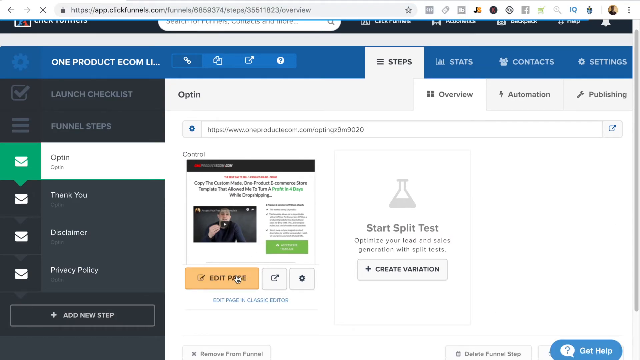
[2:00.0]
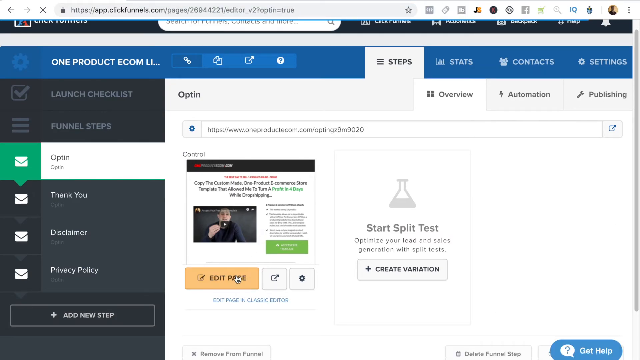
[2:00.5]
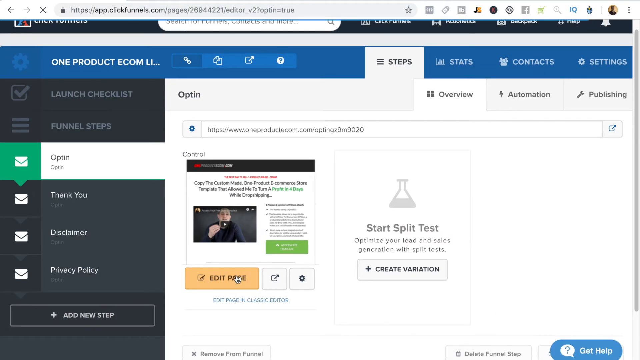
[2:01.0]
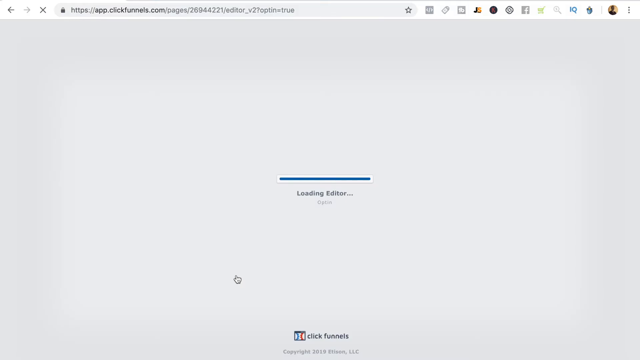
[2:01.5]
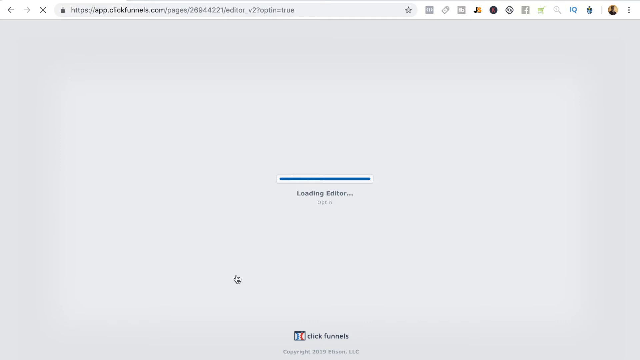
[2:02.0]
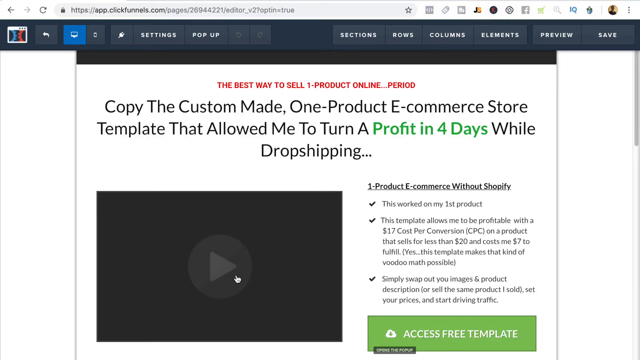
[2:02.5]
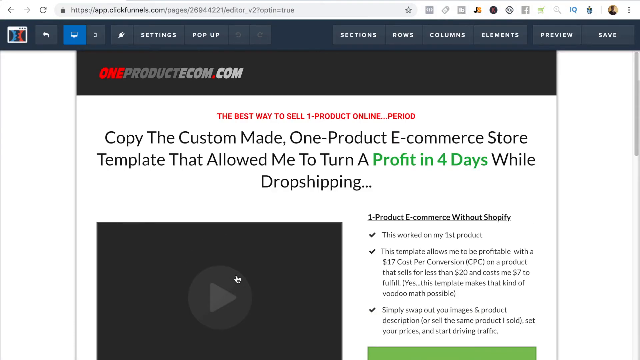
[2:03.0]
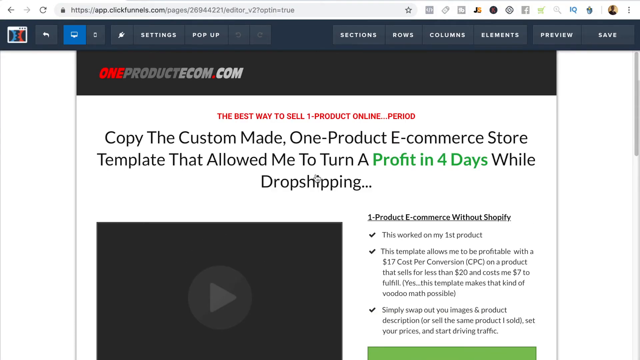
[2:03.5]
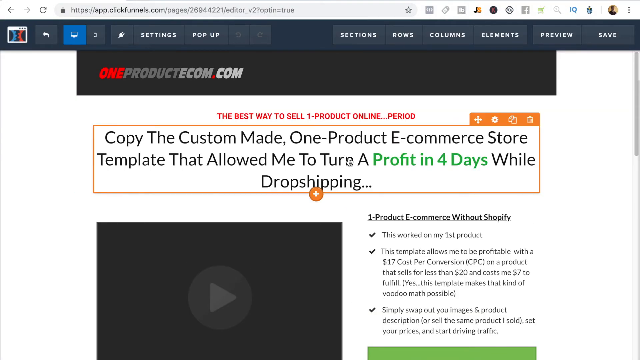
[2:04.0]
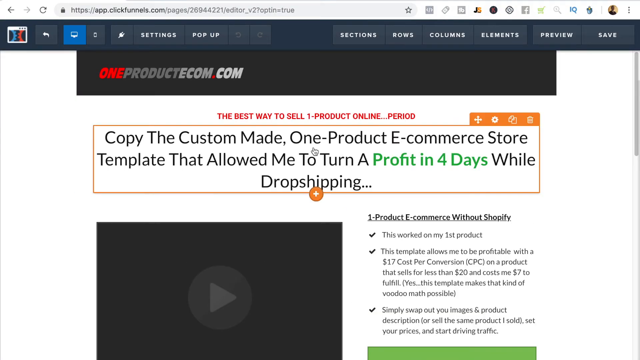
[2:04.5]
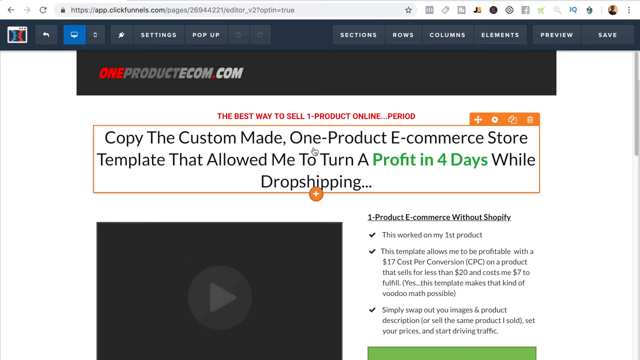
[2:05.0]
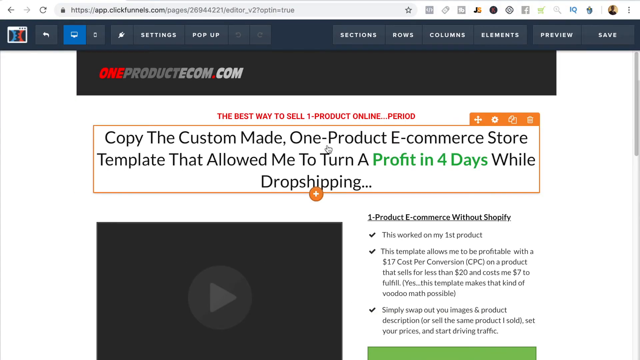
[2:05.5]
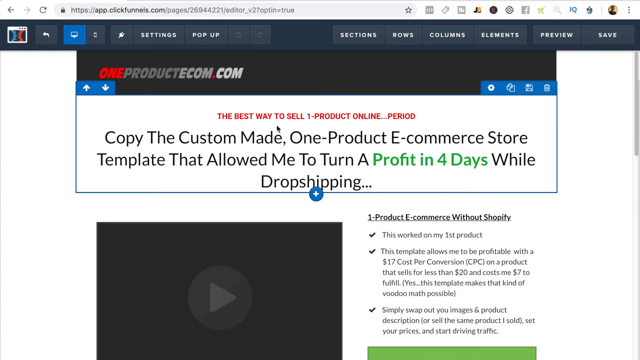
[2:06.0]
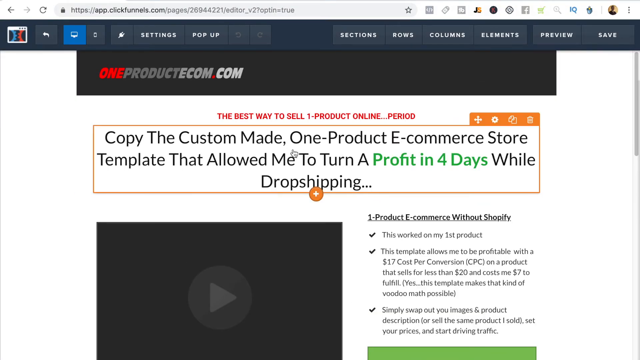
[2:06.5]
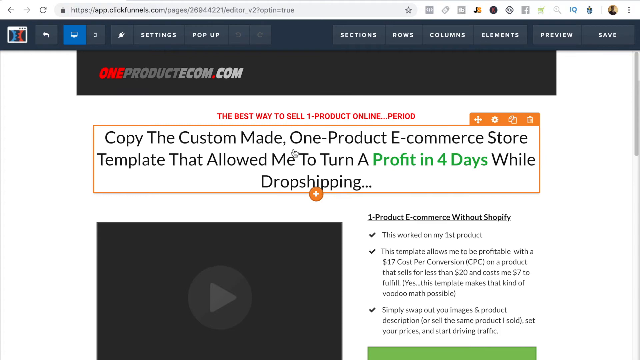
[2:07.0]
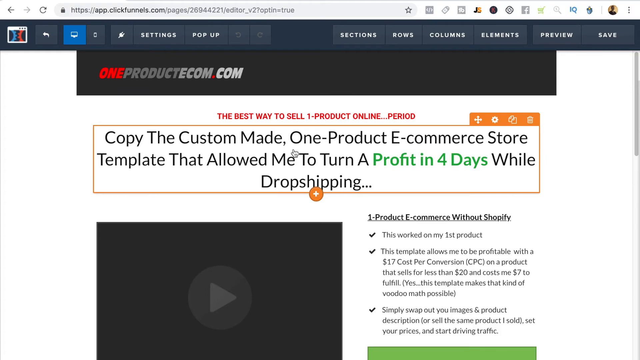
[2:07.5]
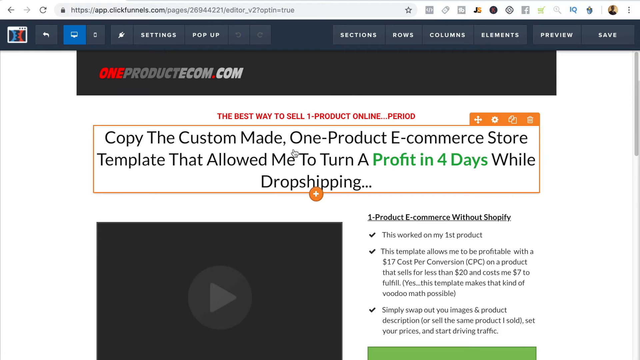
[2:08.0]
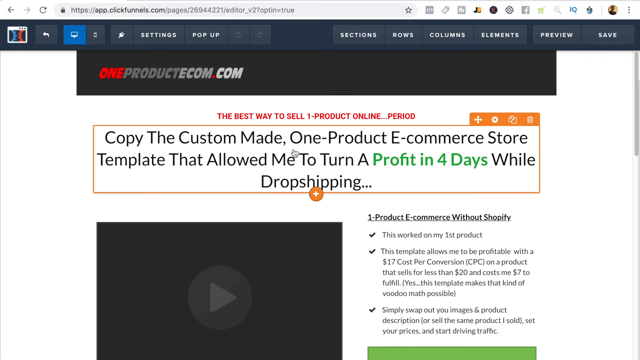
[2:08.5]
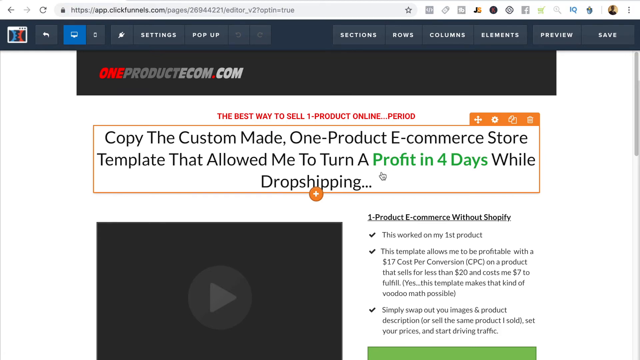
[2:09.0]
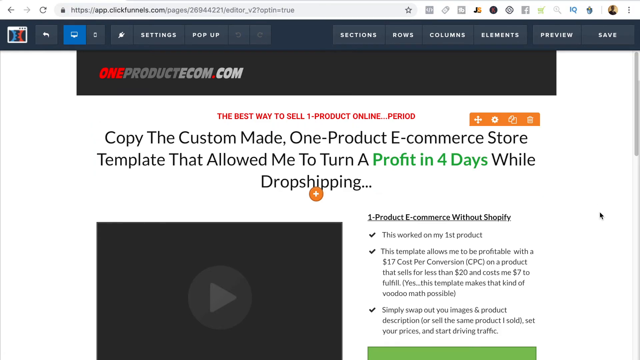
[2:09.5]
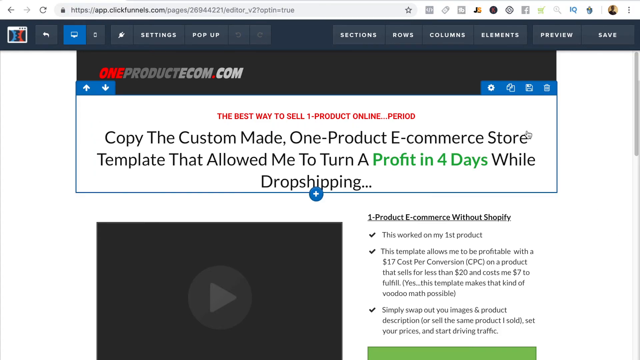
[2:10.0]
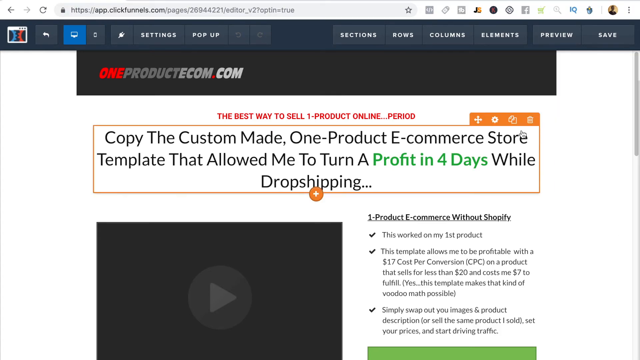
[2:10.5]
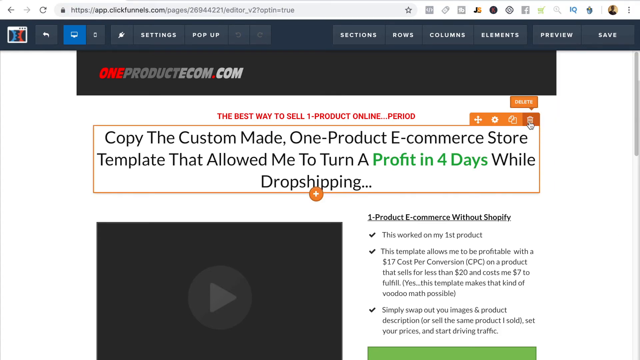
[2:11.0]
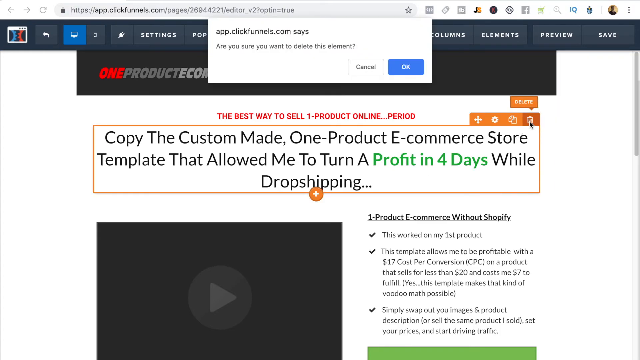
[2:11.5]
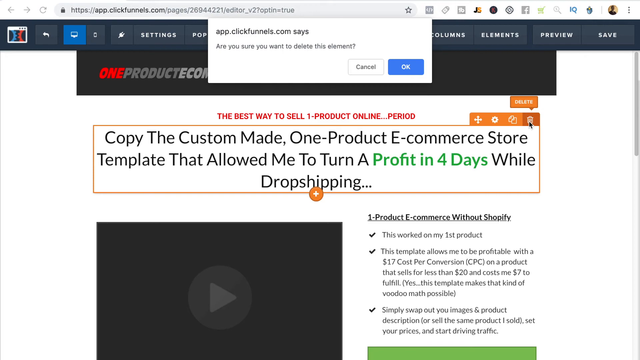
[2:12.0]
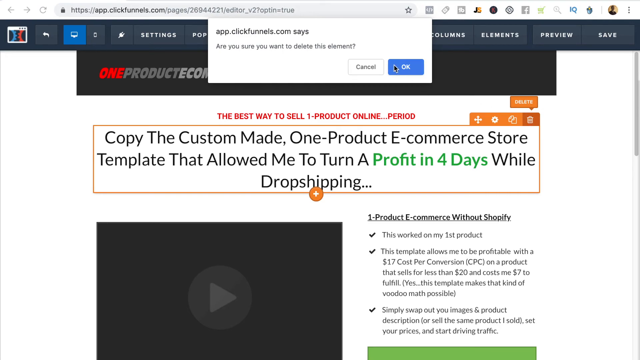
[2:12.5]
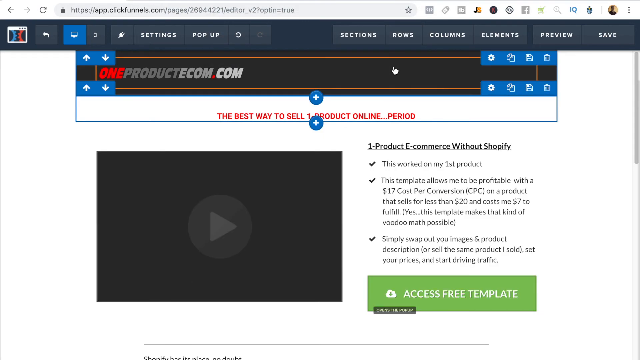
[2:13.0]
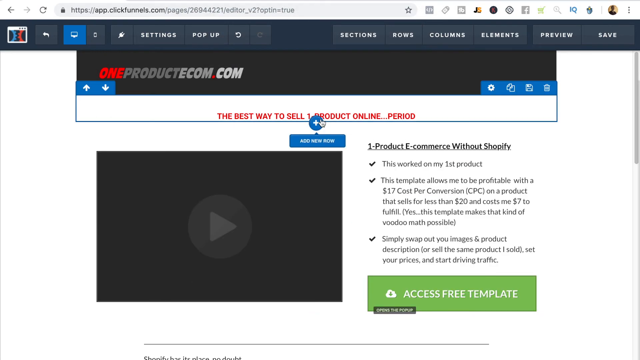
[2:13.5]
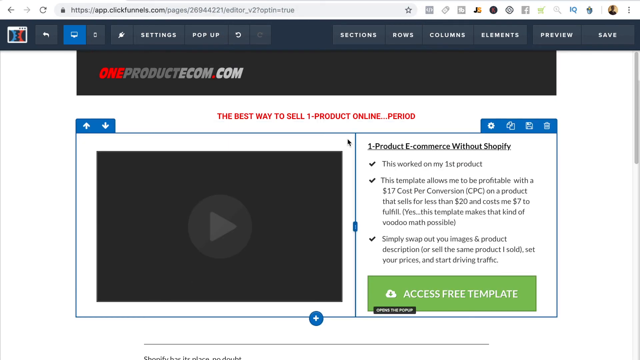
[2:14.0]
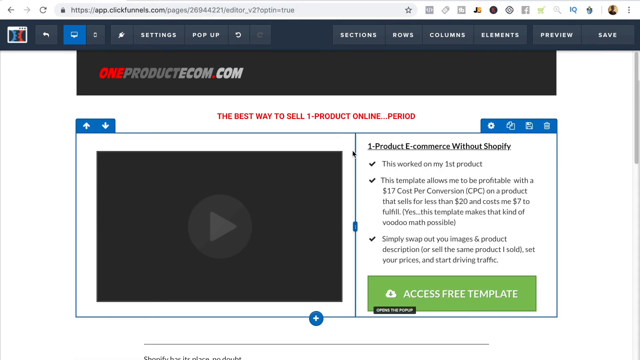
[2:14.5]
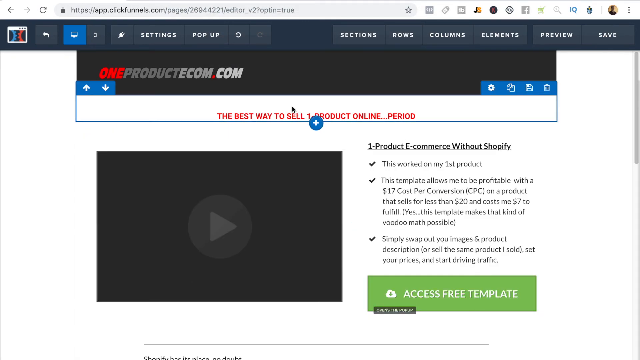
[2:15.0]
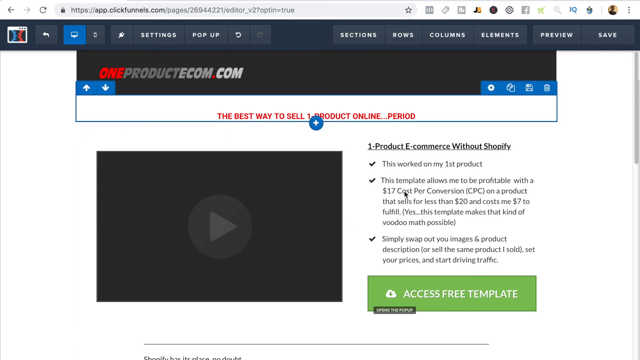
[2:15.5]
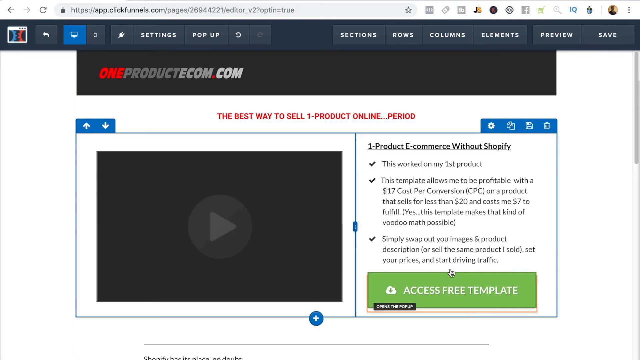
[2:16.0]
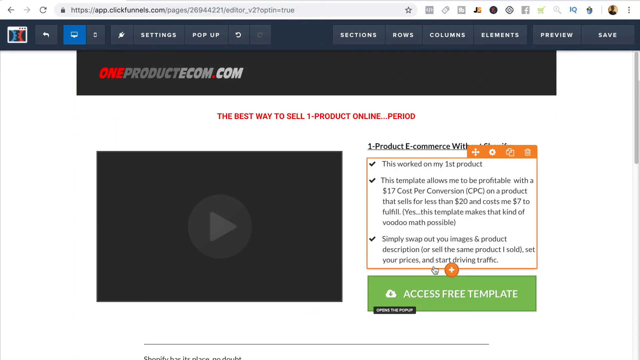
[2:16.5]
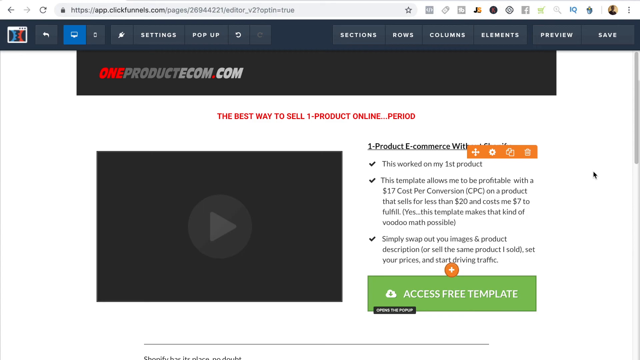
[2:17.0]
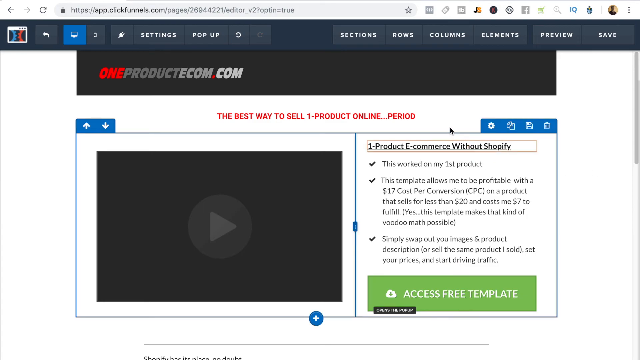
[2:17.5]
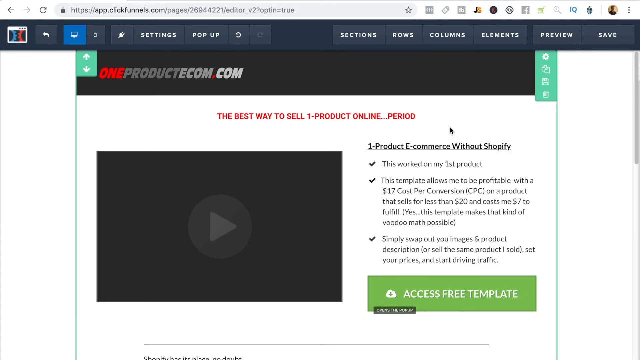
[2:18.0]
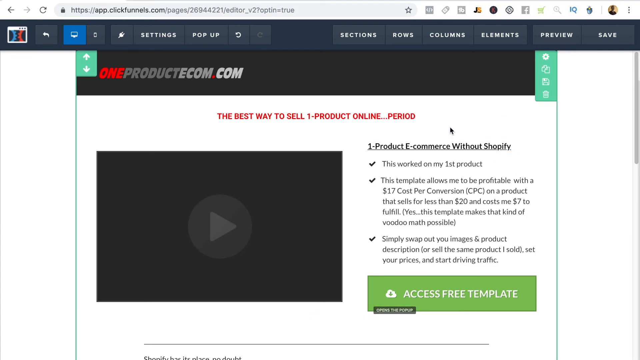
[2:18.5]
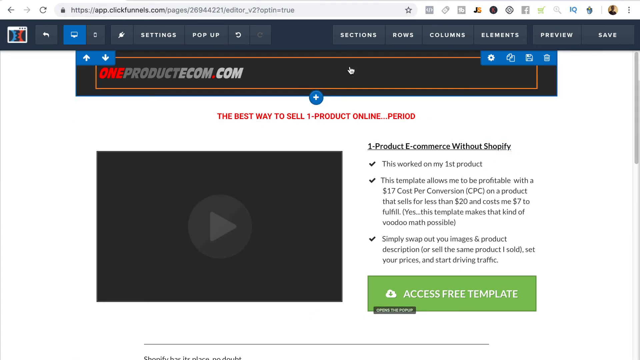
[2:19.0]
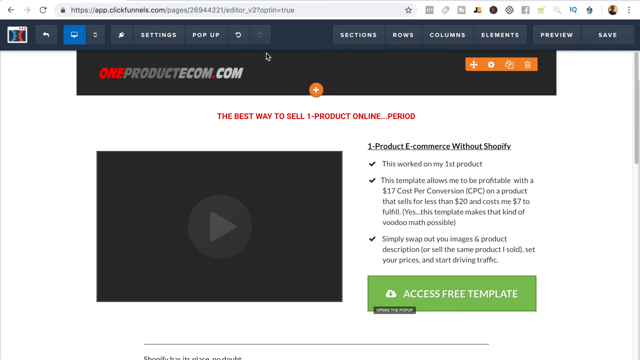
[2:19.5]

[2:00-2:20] On the newly loaded page, a menu on the left-hand side says "Lunch Checklist," "Funnel Steps," "Opt-in," "Thank You," "Disclaimer," and "Privacy Policy." Opt-in is open, and the main page has two big boxes. One says "Control" with a web page, and under it are three icons: a yellow one that says "Edit Page," a Share icon, and a Settings gear. To the right it says "Start Split Test" with a grayed-out beaker icon and reads "Optimize your Lead and Sales Generation with Split Test," with a button underneath that says "Create Variation." The cursor clicks the Edit Page icon, and a small screen pops up saying "Loading Editor" with a blue loading bar. The page that opens is oneproductcom.com, a web page that reads "Copy the custom-made one product e-commerce store template that allowed me to turn a profit in four days while drop shipping." Underneath are an unloaded video on the left and text on the right. The cursor clicks on the title and then on its text, which highlights it in a yellow box with editing options. The cursor clicks the Delete option, a pop-up appears saying "Are you sure you want to delete this element?", the mouse clicks OK, and the title of the page disappears. The mouse then hovers over other editable elements of the website.